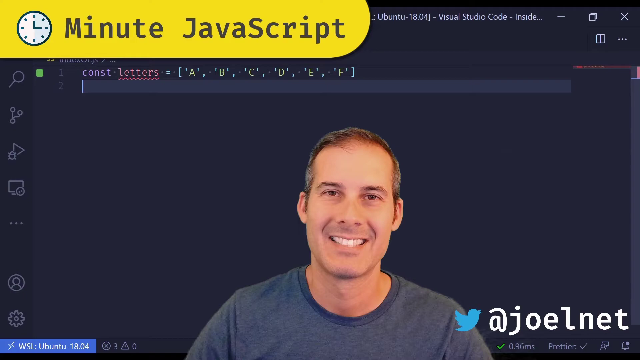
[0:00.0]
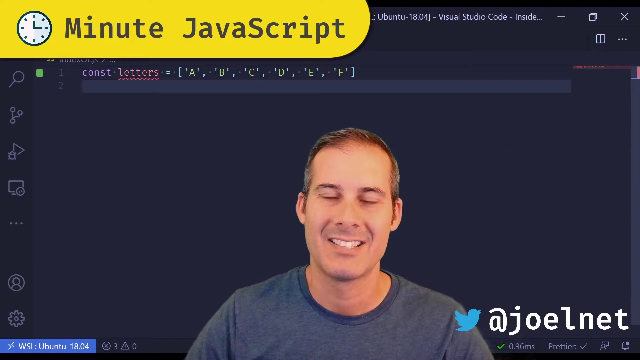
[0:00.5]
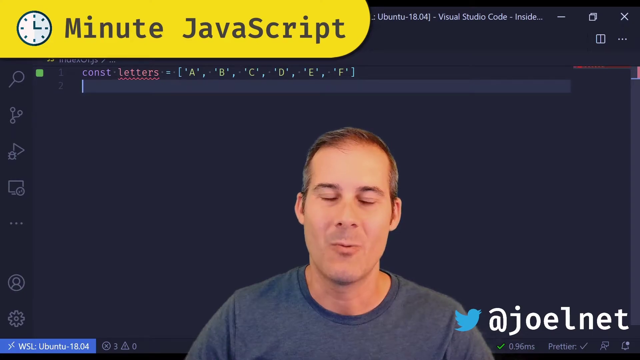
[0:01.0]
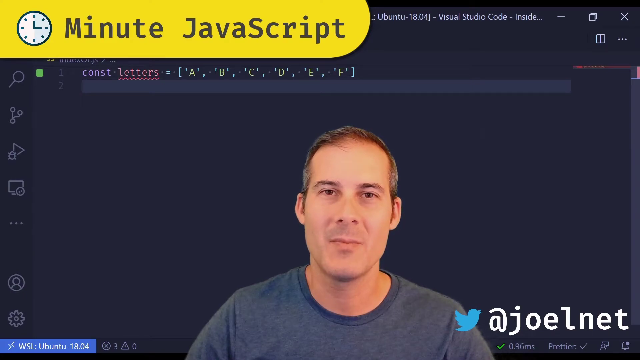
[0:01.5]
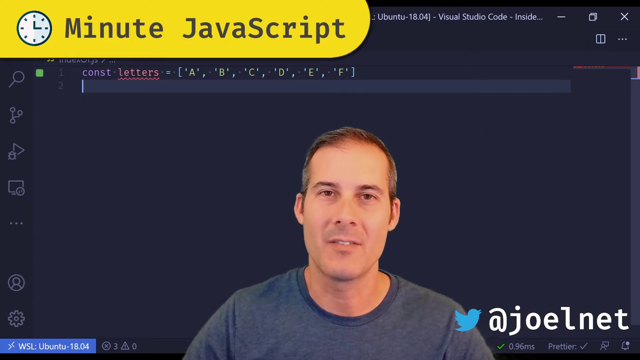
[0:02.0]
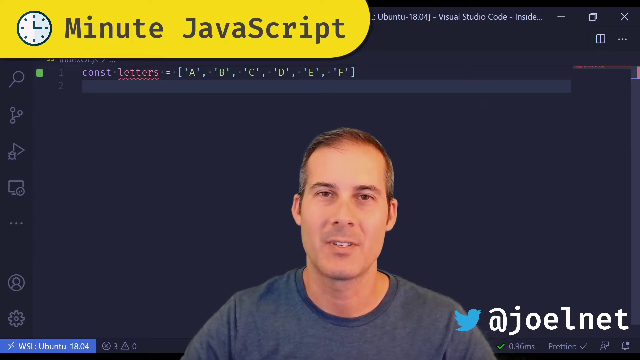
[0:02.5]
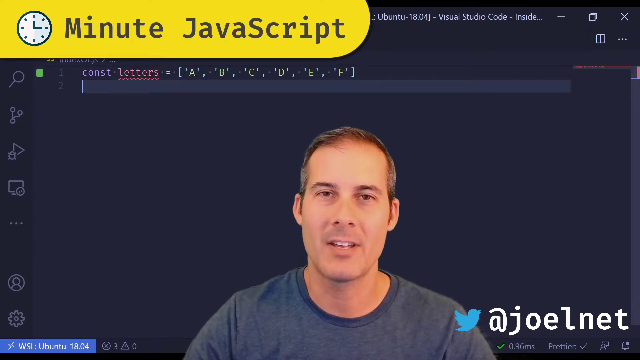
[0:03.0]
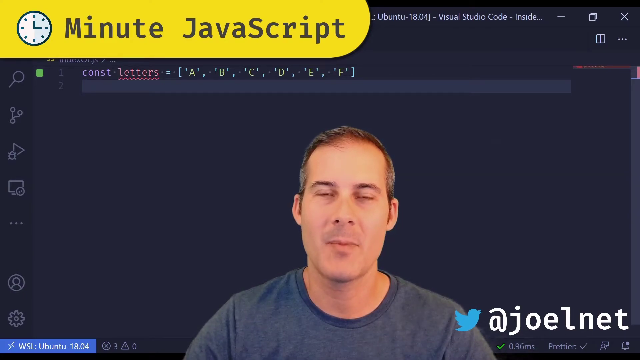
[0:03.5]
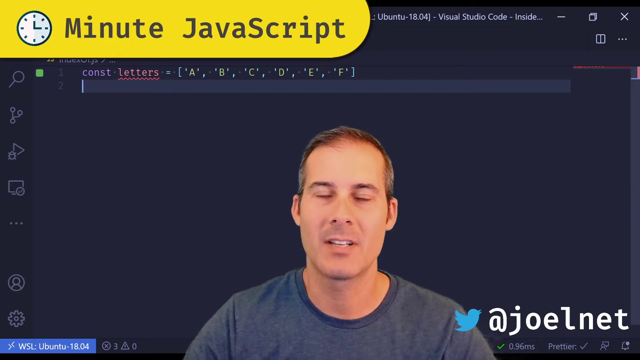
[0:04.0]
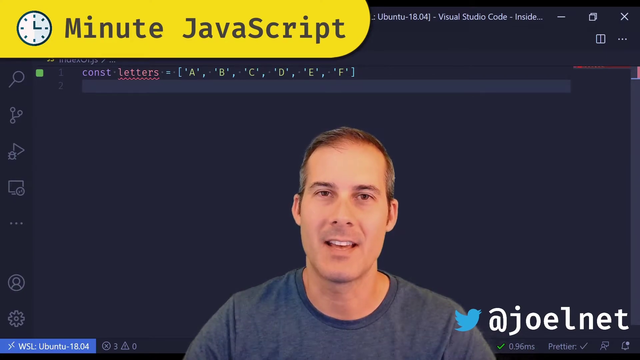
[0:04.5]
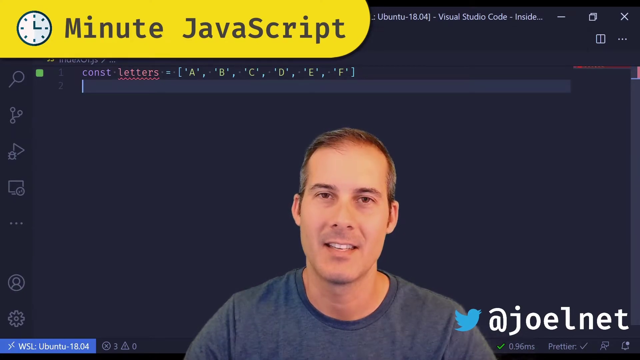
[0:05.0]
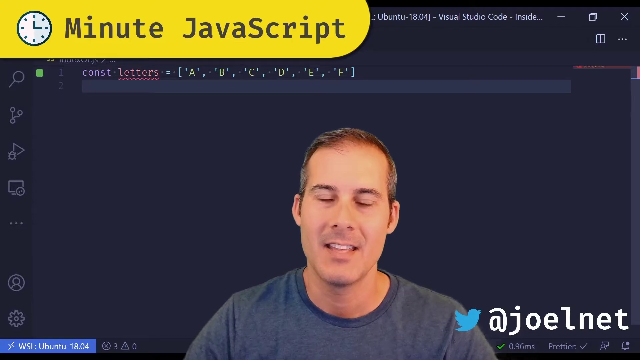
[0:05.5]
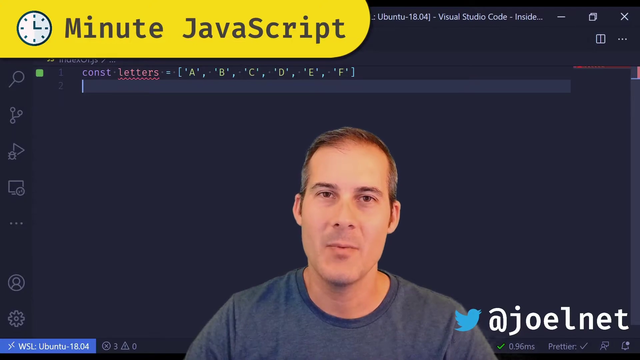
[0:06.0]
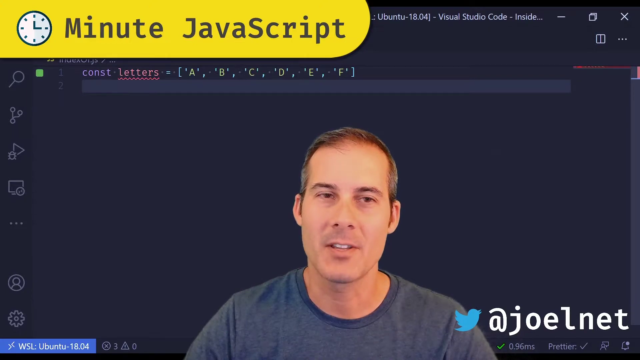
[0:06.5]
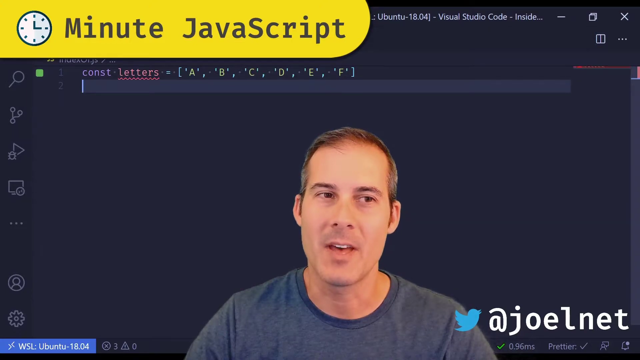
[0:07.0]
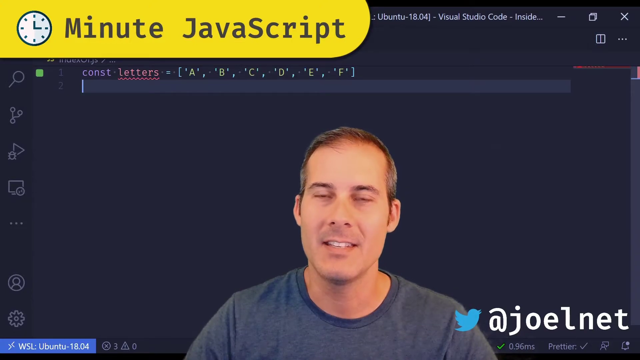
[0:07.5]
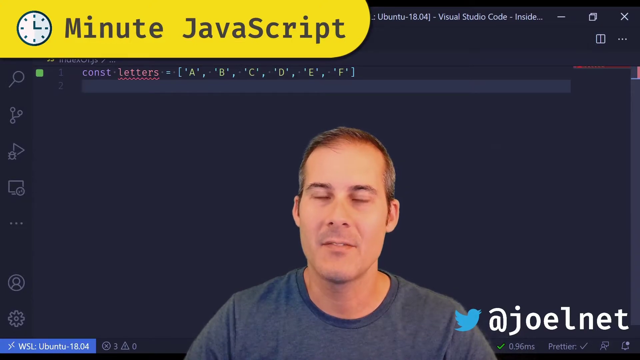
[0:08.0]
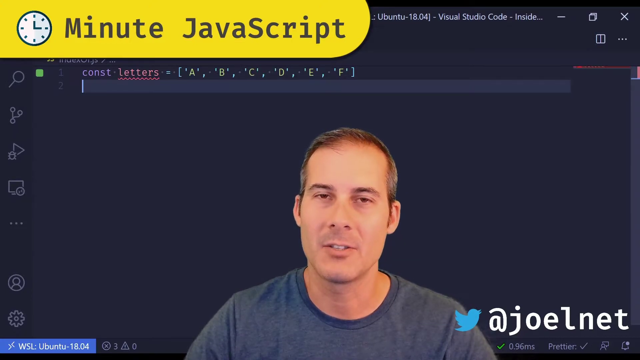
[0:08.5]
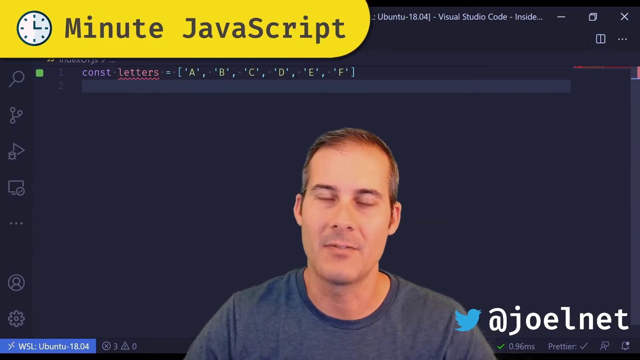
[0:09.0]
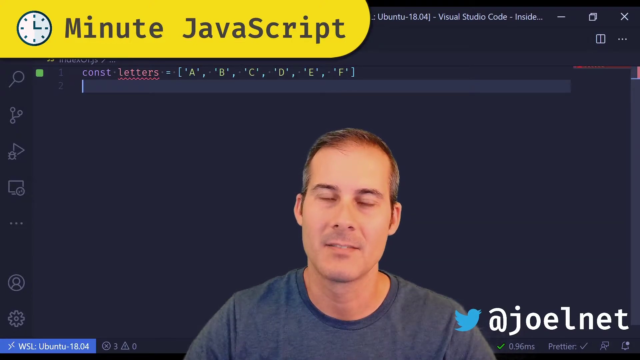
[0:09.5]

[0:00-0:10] The words "Minute JavaScript" appear on the screen, and a gentleman is in the center of the frame. Right behind him is what appears to be a superimposed computer screen, and he appears to be teaching how to learn JavaScript. In the bottom left corner is his contact information for Twitter, with the handle "joelnet". A little information shows in the top left corner: a clock and a small banner reading "minute" next to it, which kind of looks like a little board with letters on it. Not much of what is behind him is visible yet.